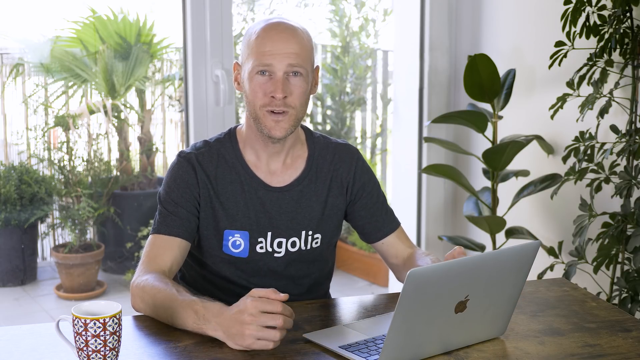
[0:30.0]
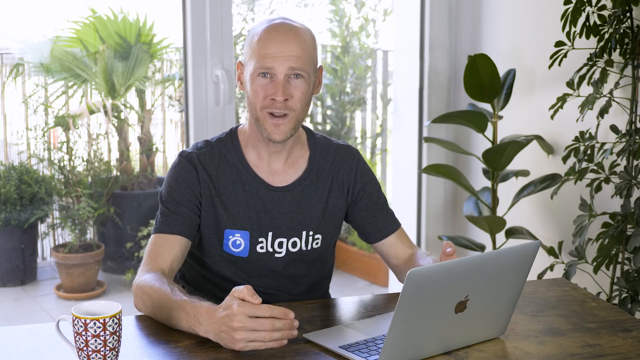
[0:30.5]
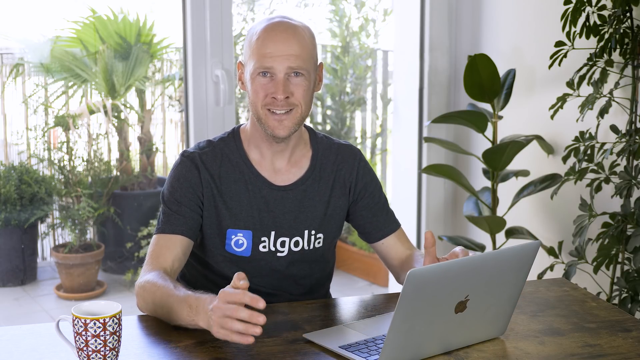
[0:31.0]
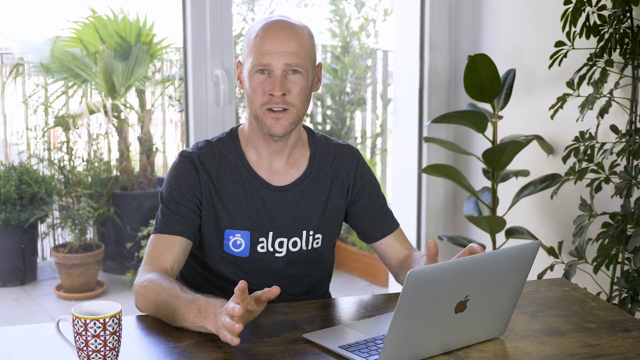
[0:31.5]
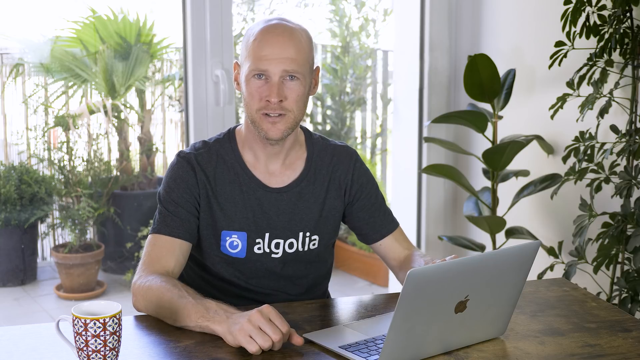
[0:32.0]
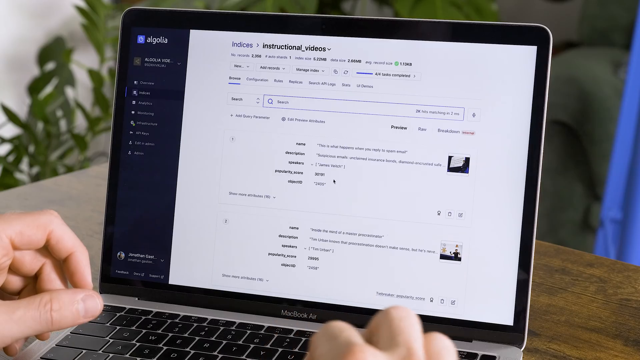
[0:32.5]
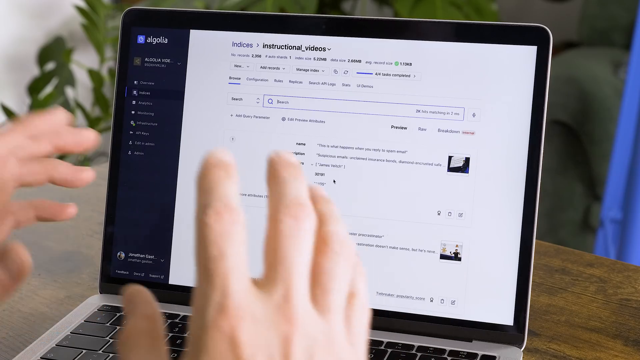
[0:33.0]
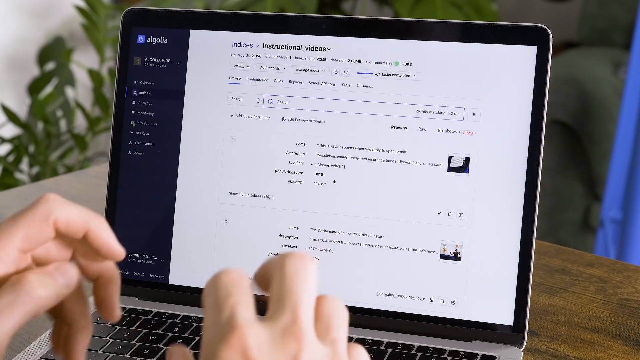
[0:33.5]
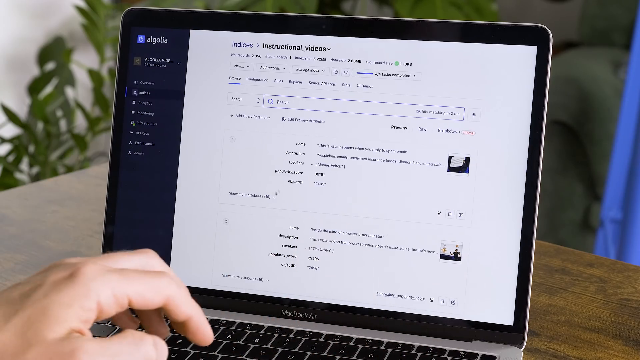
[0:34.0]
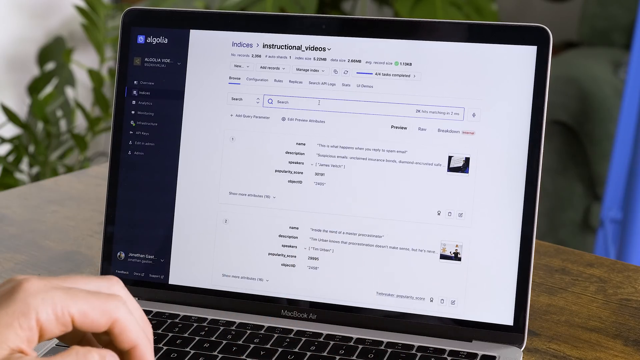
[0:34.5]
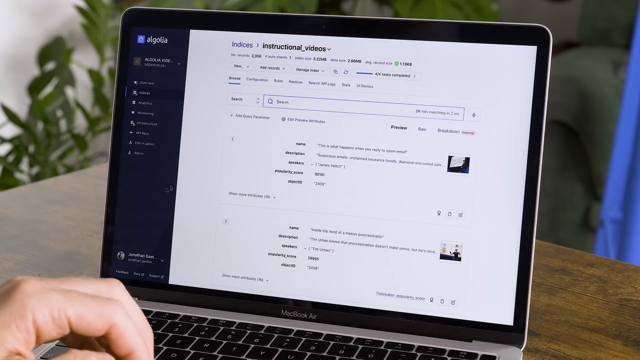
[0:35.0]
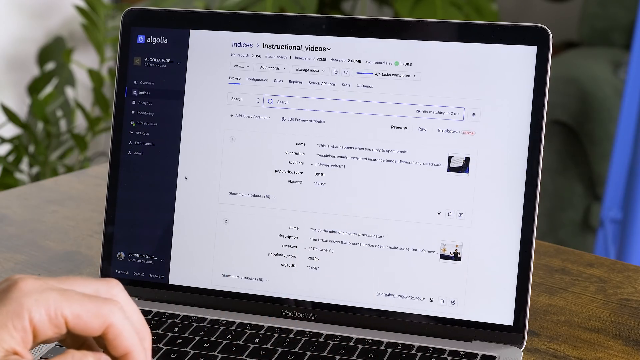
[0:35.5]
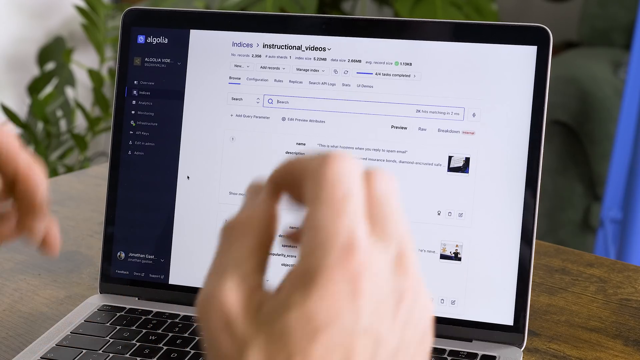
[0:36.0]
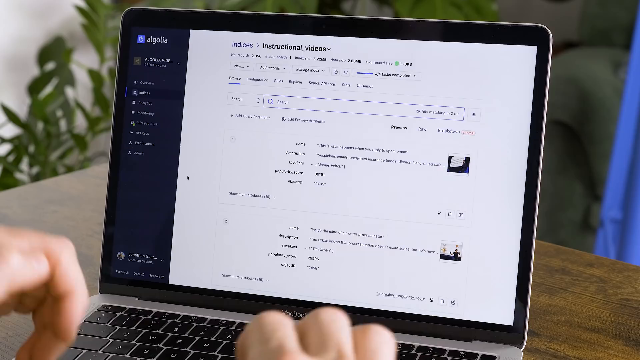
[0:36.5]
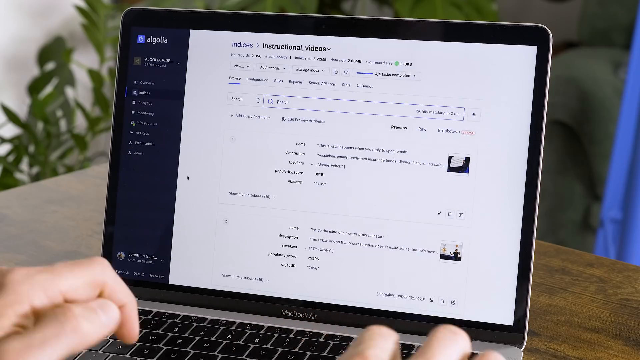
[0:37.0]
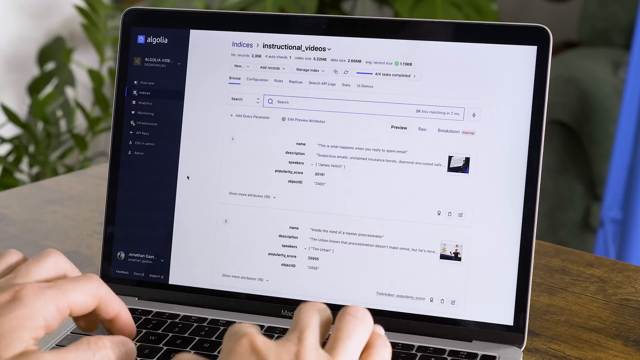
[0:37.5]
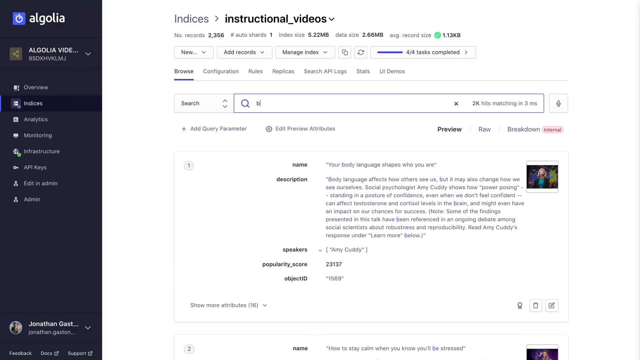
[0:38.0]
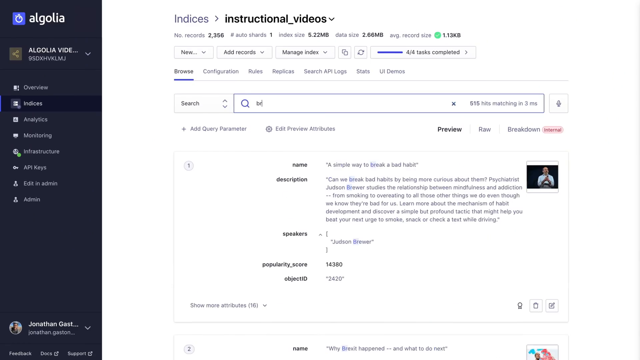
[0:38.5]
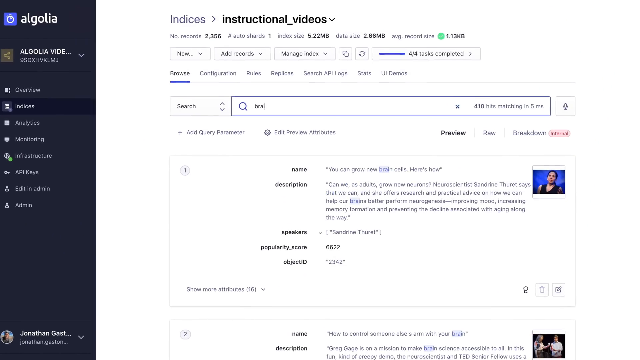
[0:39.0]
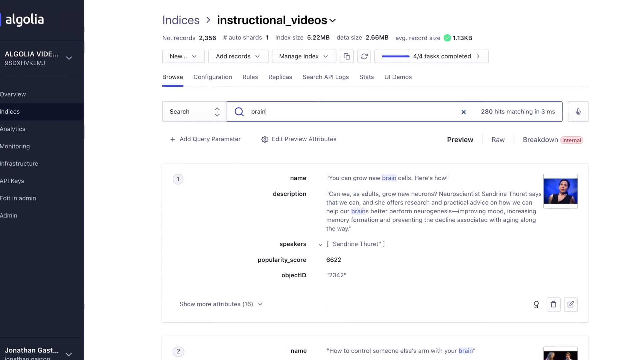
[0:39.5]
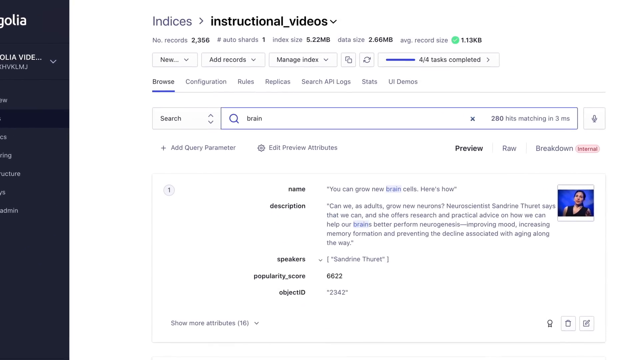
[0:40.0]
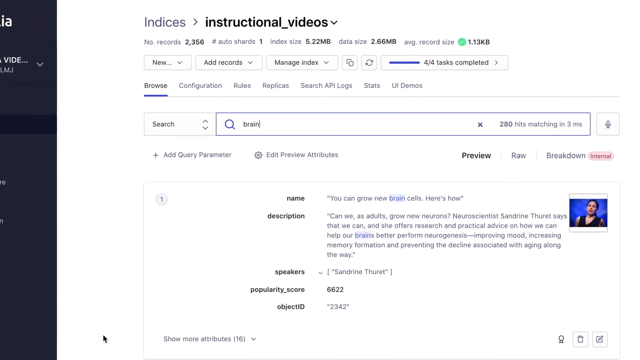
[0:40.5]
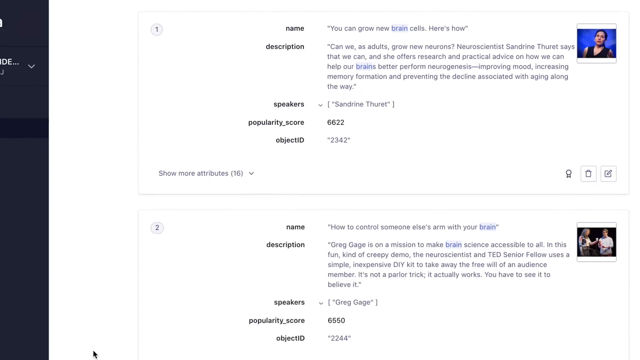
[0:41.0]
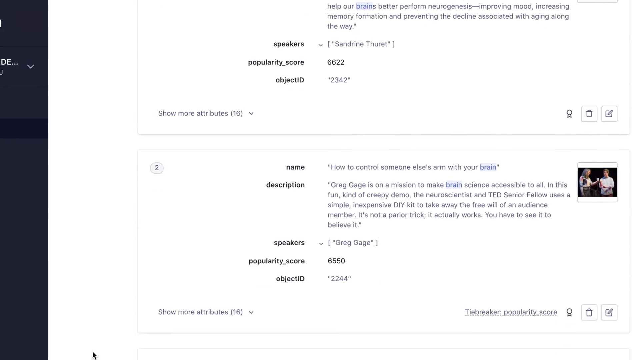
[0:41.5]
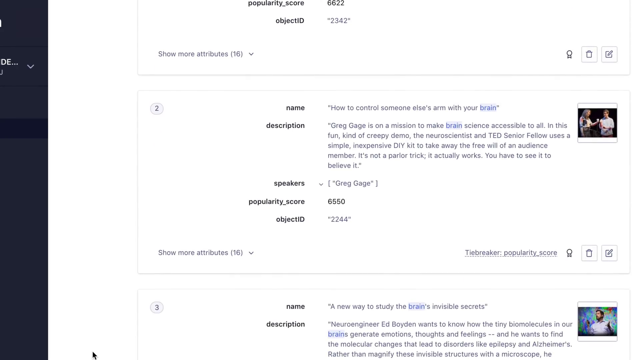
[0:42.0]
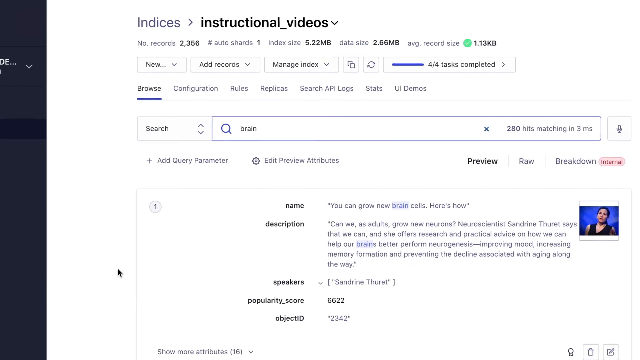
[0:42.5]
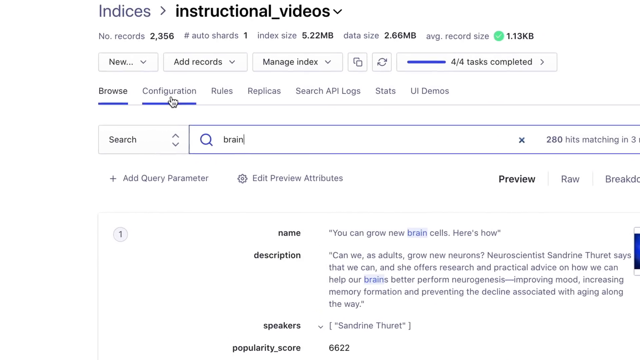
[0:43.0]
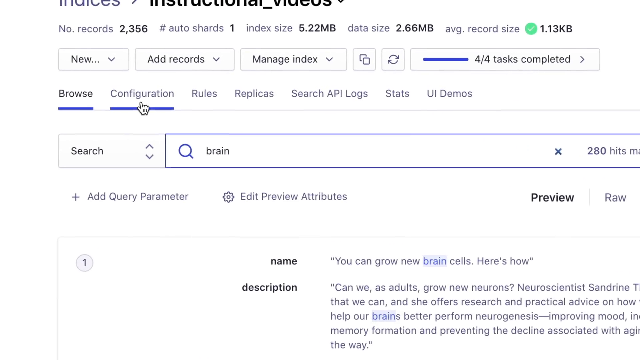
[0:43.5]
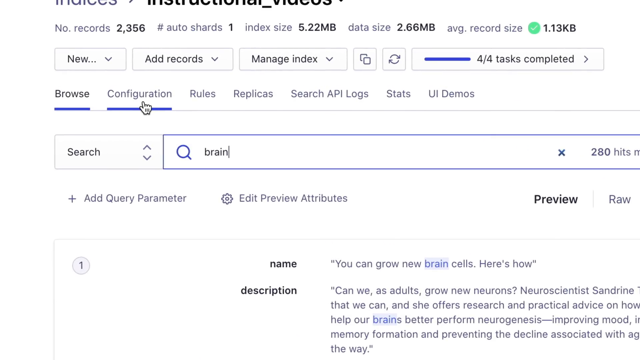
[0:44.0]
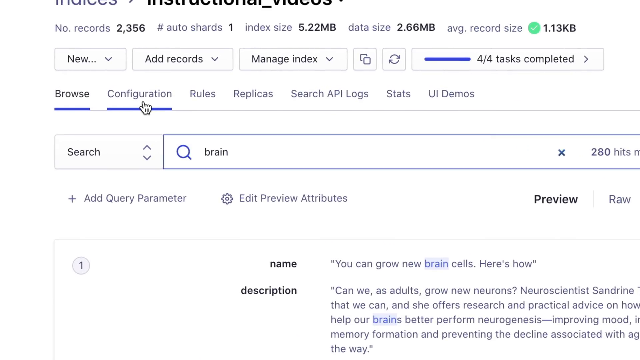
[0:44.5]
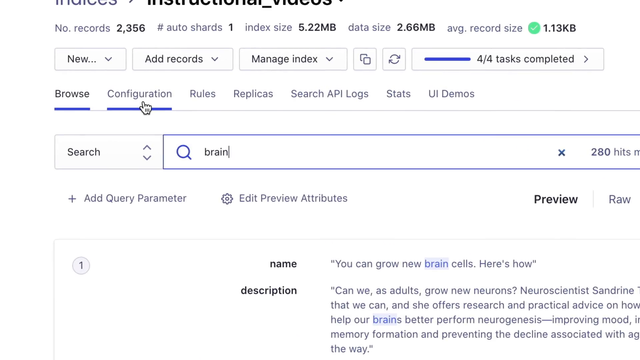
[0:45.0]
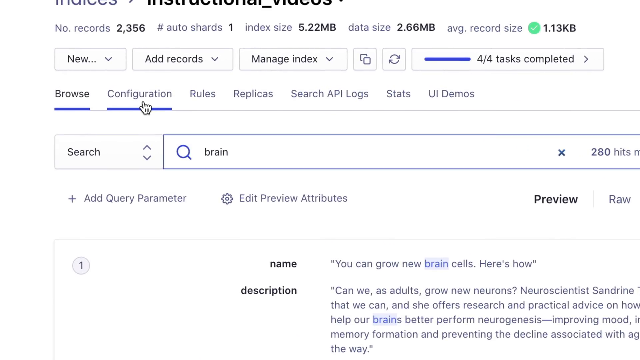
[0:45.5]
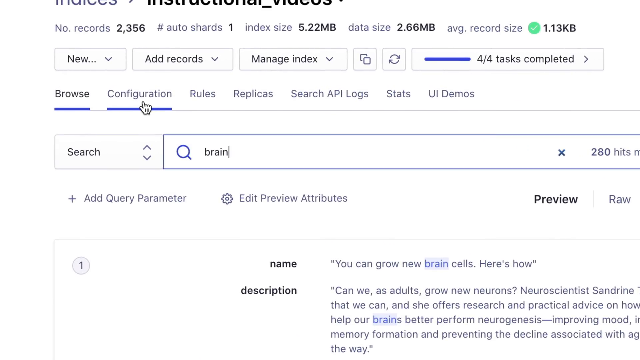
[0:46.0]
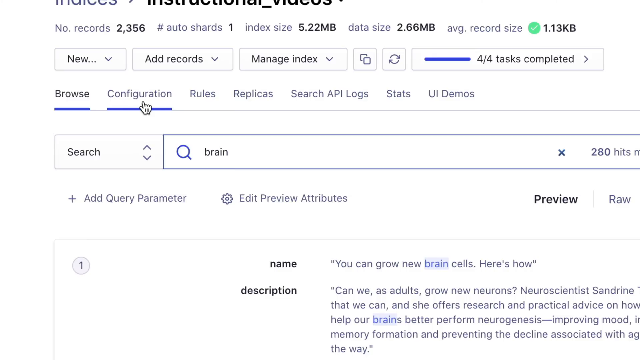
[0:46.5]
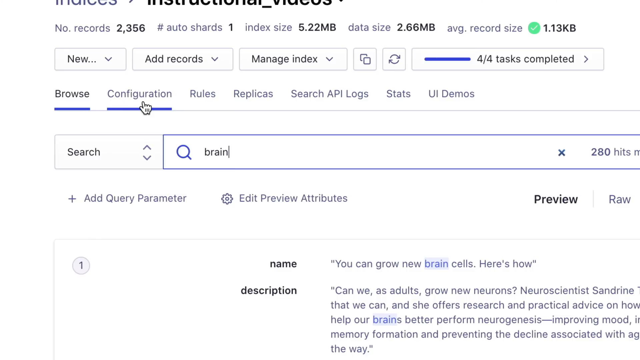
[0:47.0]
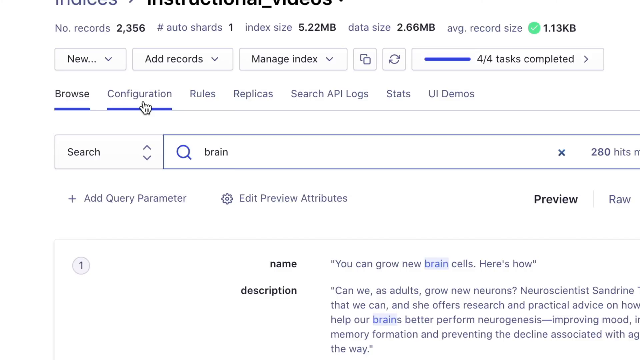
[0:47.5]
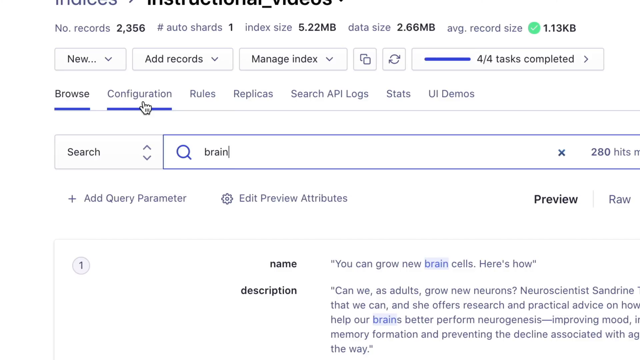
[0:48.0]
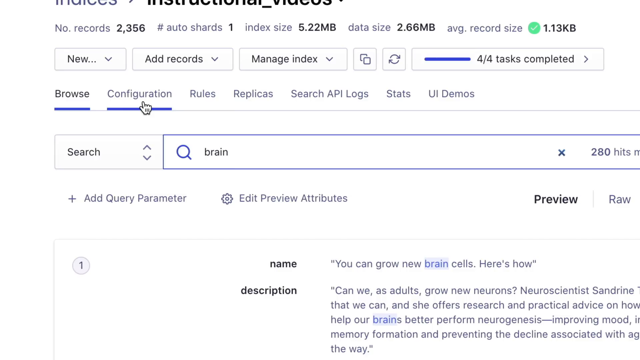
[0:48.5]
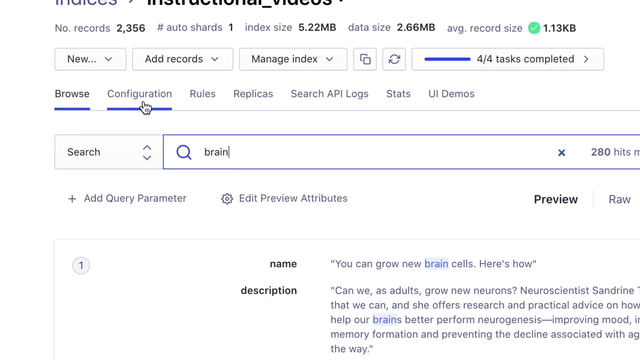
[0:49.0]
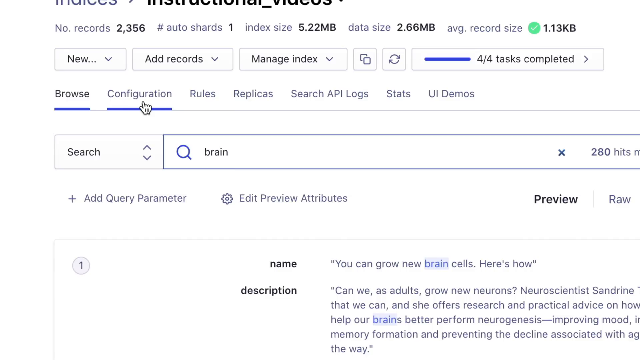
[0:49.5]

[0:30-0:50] A man promotes something called Algolia, which seems to be a business performance type app or website. He is apparently in his kitchen, working on a Mac computer, with a cup of coffee and lots of plants around him. He is a white, bald man with a scruffy beard growing in and the word "Algolia" on his shirt, and he gestures to the camera. The video then shows the screen of his computer while it is still visible that he is in his kitchen. It says "Indices" and "Instructional Videos", and there are items like a library that can be clicked. He gestures, then starts typing, types in "brain", scrolls down to "Configuration" and pauses there. The computer screen says "Algolia" in the corner, there are more choices on the left-hand side, and it looks like a dashboard. He has chosen "Algolia Videos" and has four of four tasks completed.